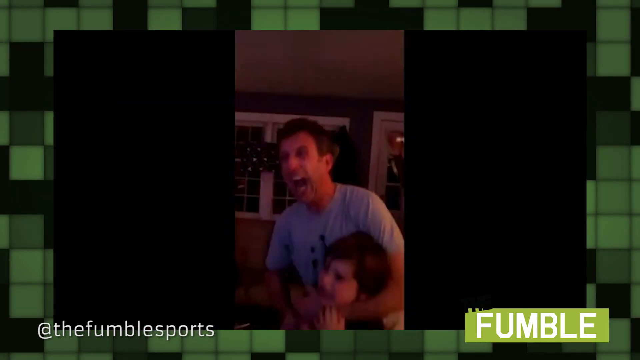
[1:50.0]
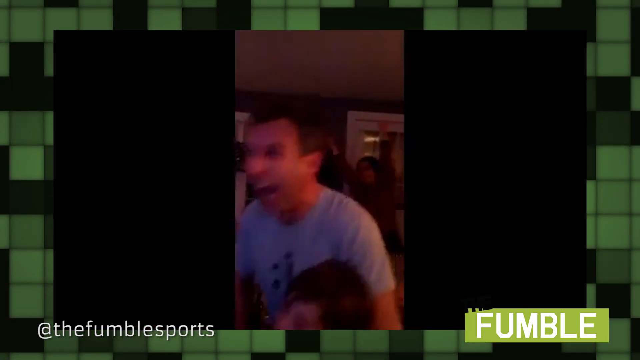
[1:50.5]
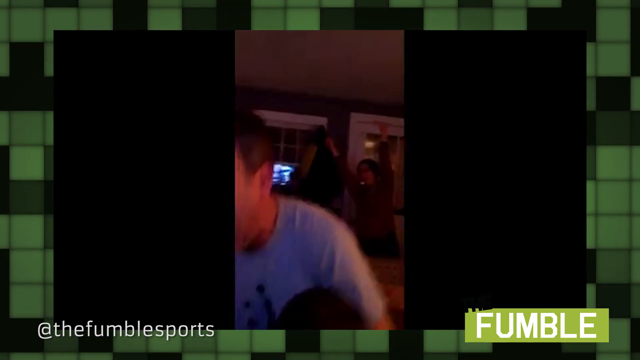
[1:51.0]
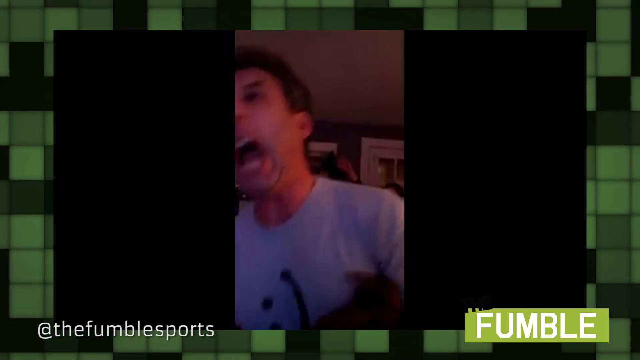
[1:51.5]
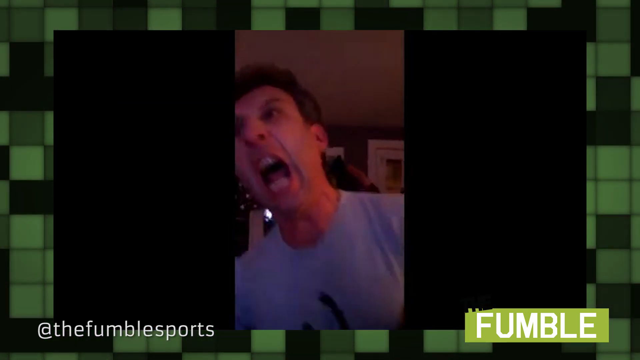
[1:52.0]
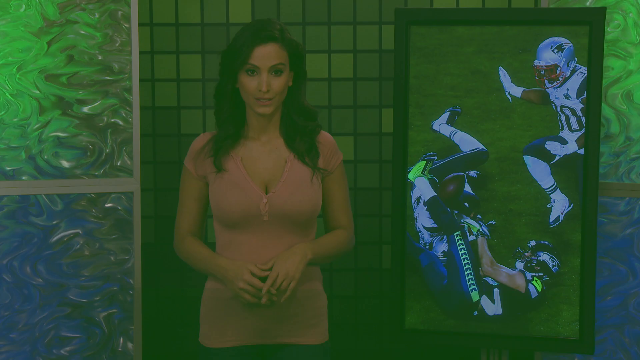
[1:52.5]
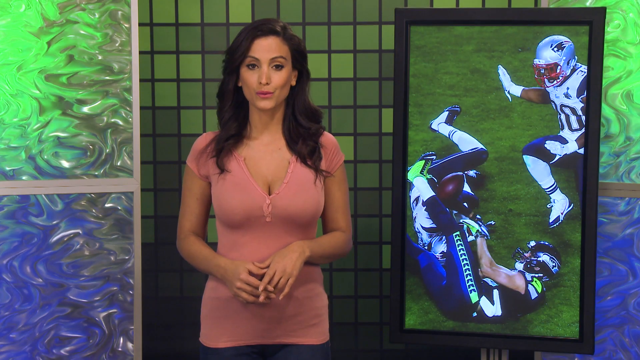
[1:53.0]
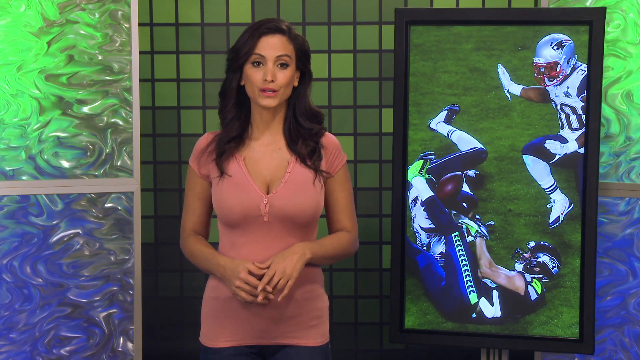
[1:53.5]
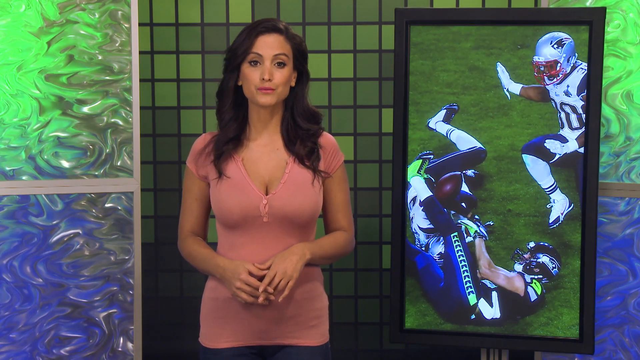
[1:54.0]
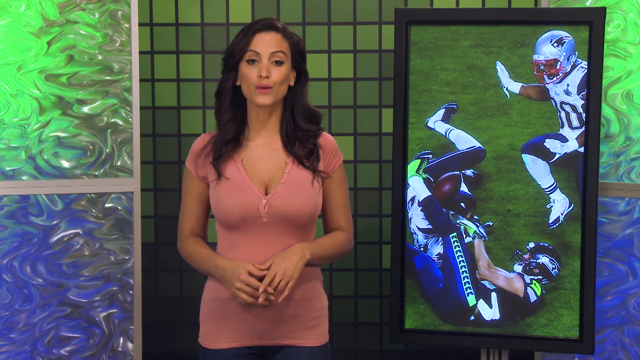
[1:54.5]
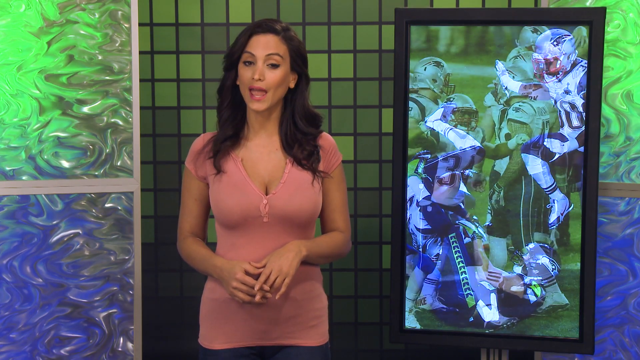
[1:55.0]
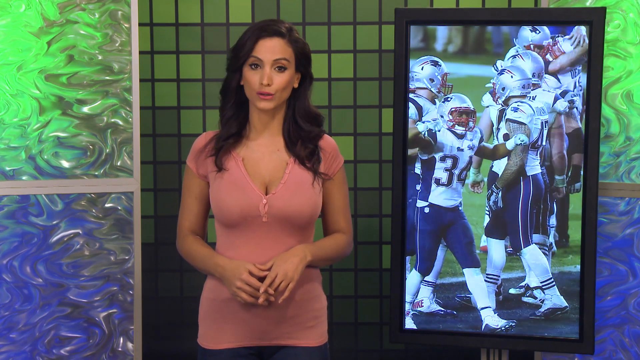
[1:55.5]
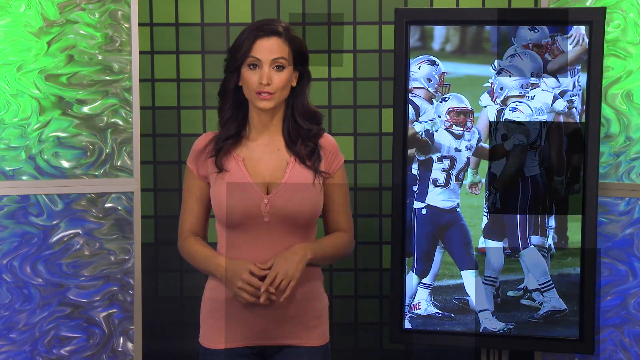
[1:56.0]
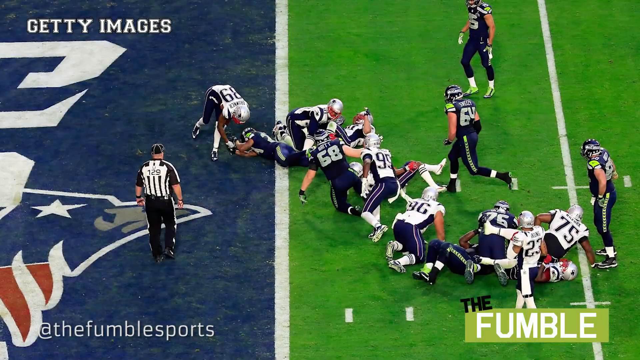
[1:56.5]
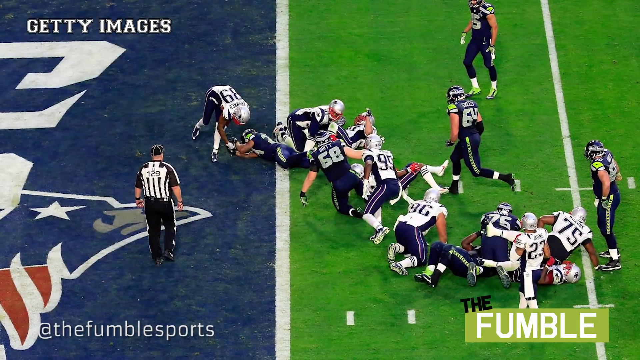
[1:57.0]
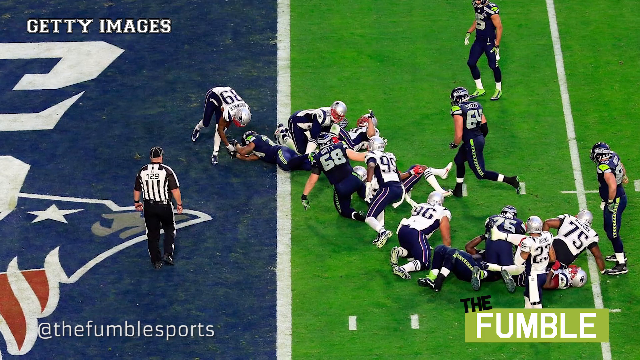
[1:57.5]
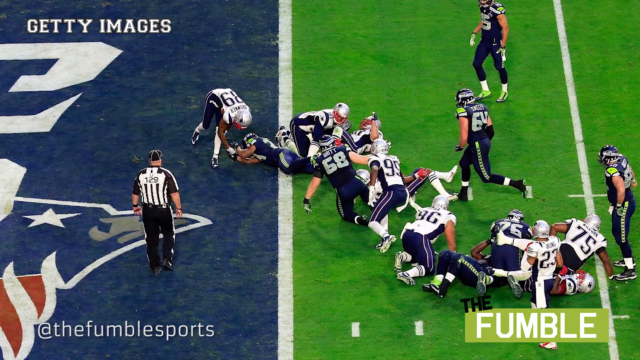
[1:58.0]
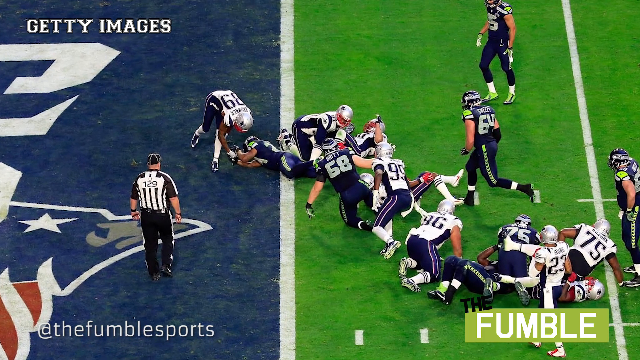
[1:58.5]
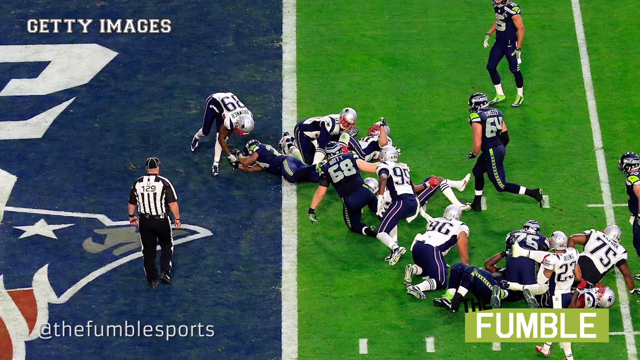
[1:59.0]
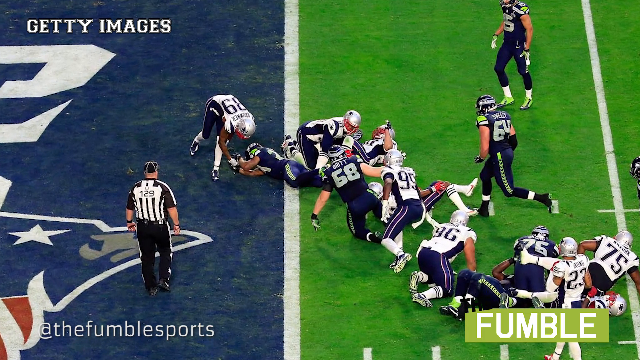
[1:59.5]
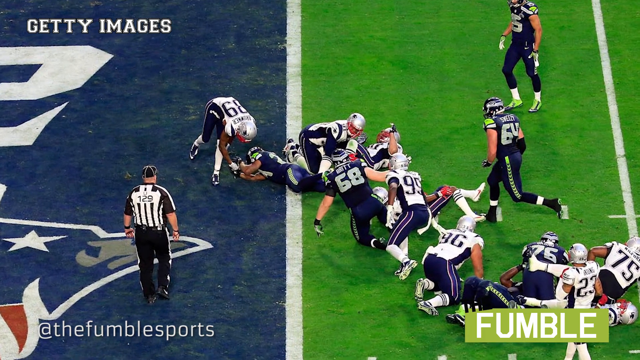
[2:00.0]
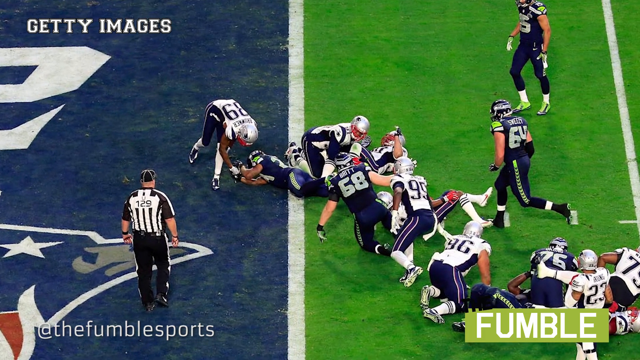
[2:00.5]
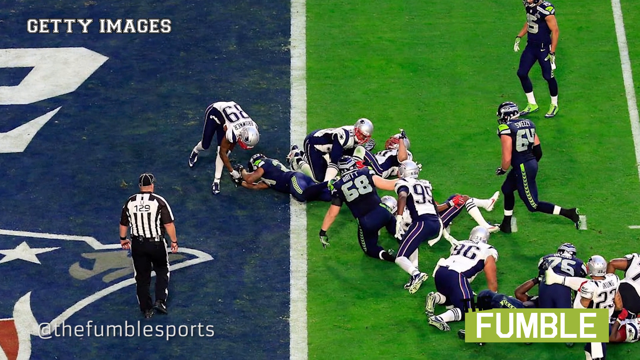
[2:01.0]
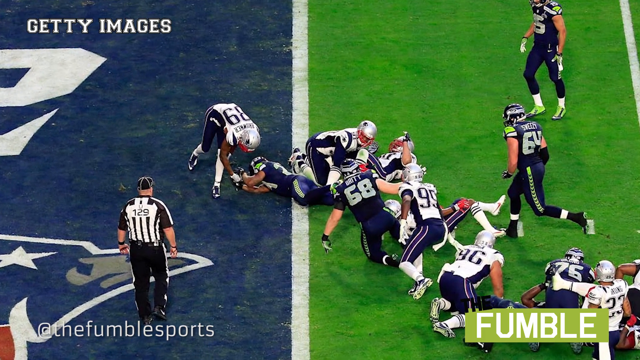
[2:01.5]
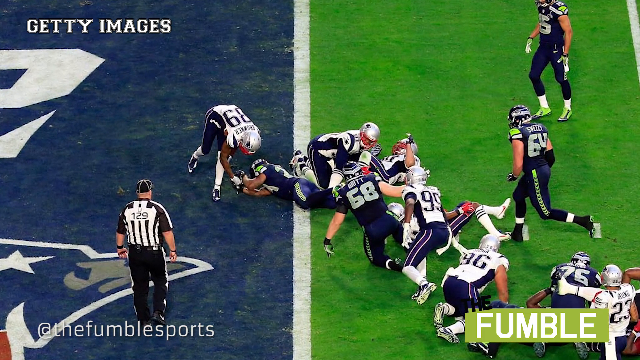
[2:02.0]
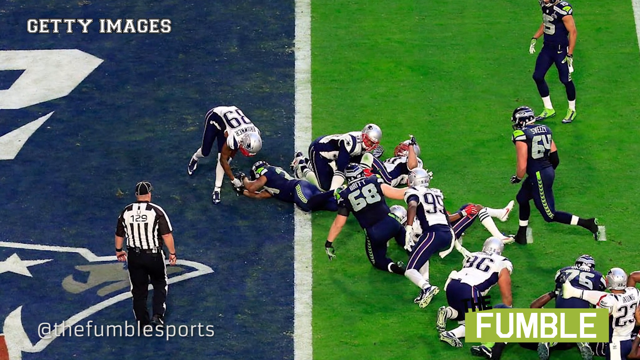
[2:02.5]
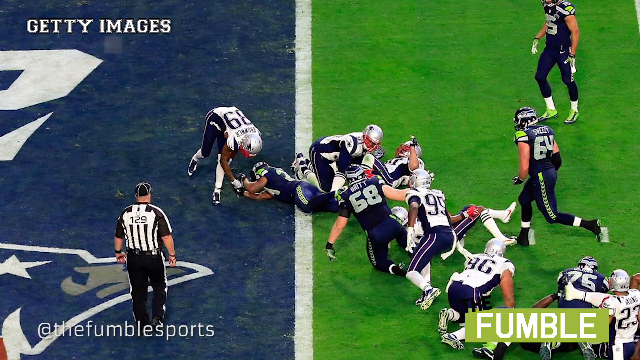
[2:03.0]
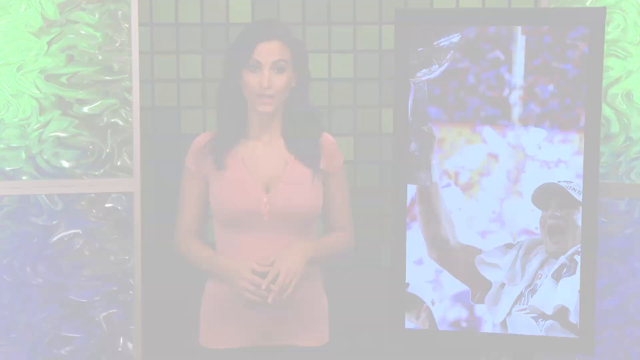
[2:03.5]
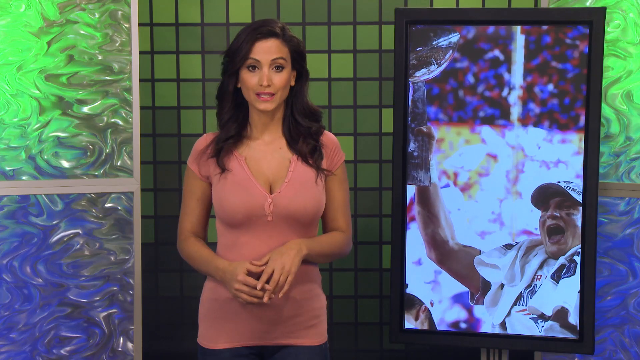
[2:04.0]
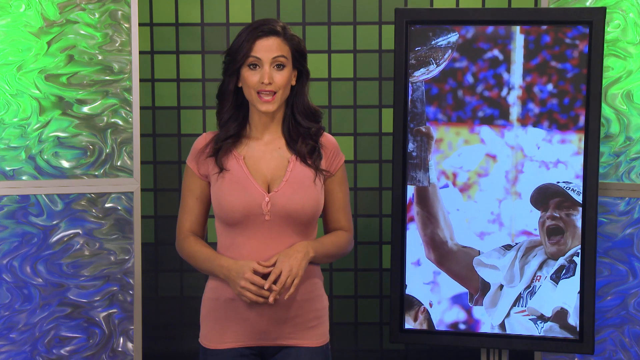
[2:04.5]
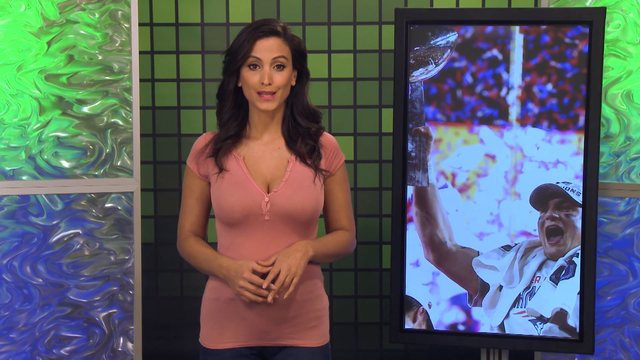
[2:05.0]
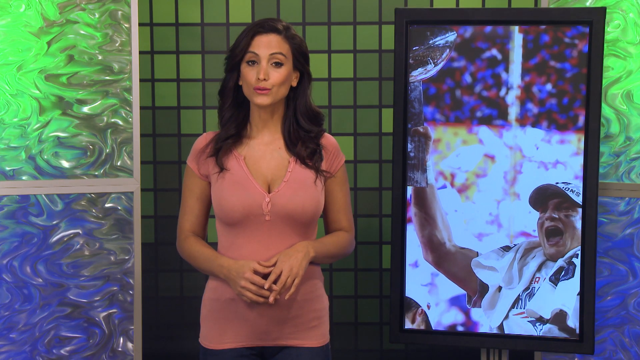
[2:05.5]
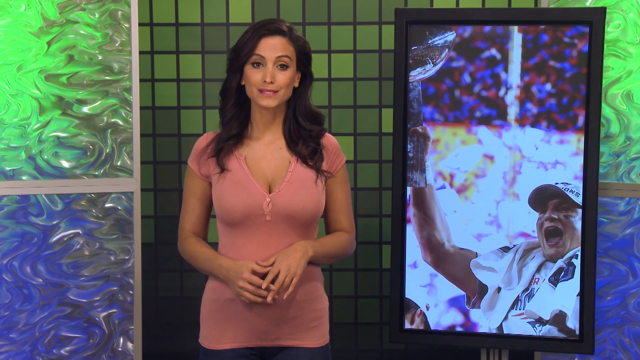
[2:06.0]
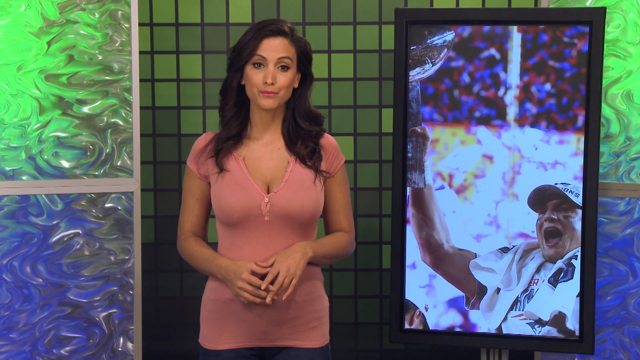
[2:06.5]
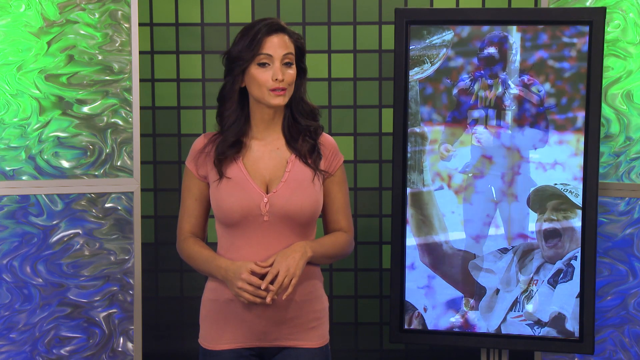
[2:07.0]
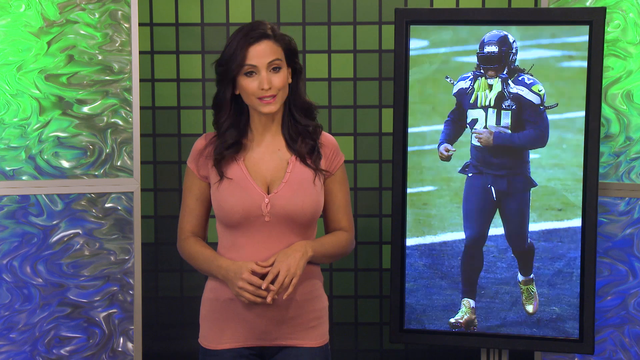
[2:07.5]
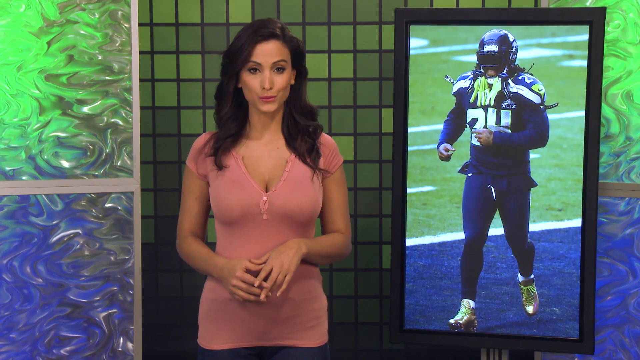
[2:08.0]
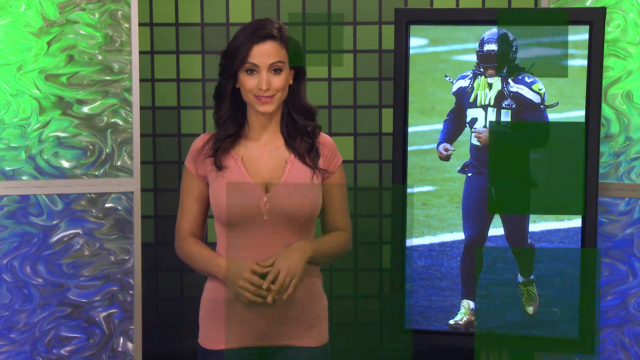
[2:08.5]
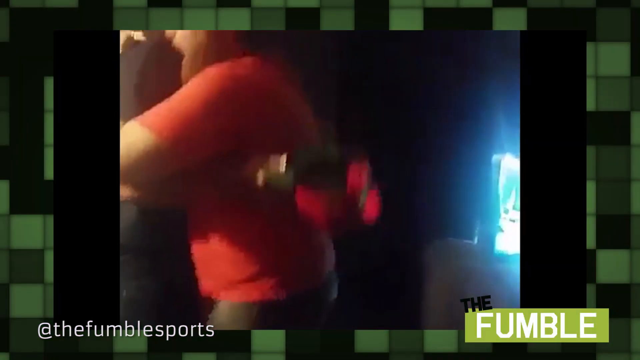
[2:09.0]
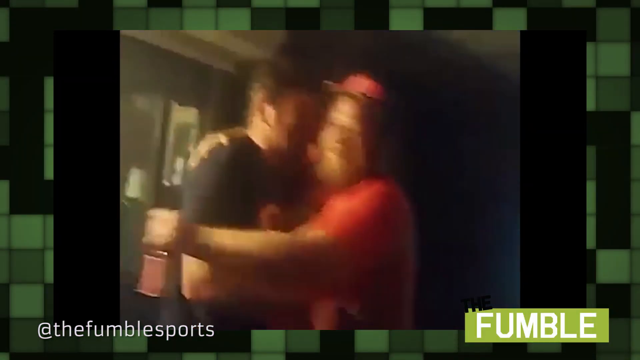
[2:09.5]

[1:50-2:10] A man yells very enthusiastically with his child beside him. The camera cuts back to Crystal, the female reporter, who continues talking with her hands resting in front of her at her waist area. On the right-hand side, an image shows Patriots players in a group, apparently celebrating. The next image shows a cluster of Patriots and Seahawks players, many of them on the ground; it looks like a Seahawks player crossed the goal line as a Patriots player is hunched over downward, seemingly trying to get the ball out. The camera zooms in further on this scene to the left. Crystal is back on screen, continuing to talk as the image on the right goes from a Patriots player to a Seahawks player, followed by a short video of what looks like two fans hugging.